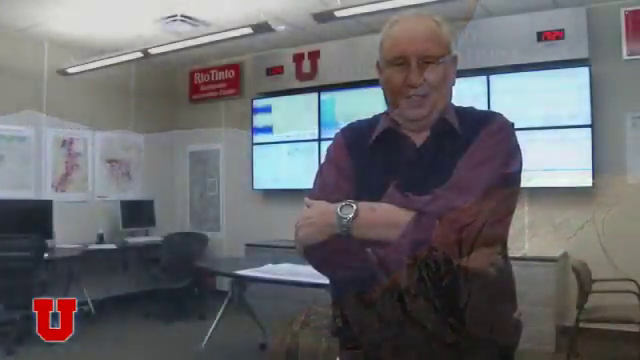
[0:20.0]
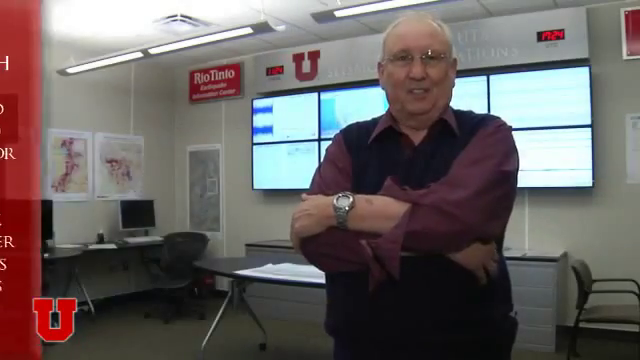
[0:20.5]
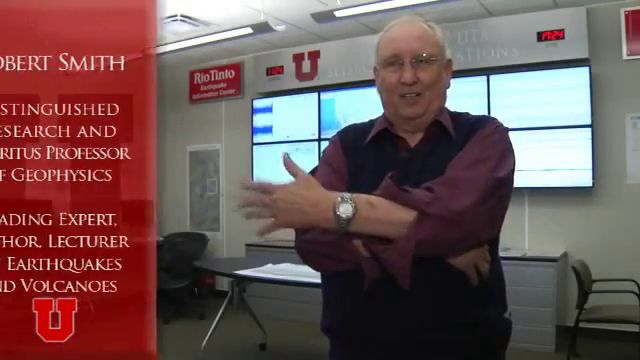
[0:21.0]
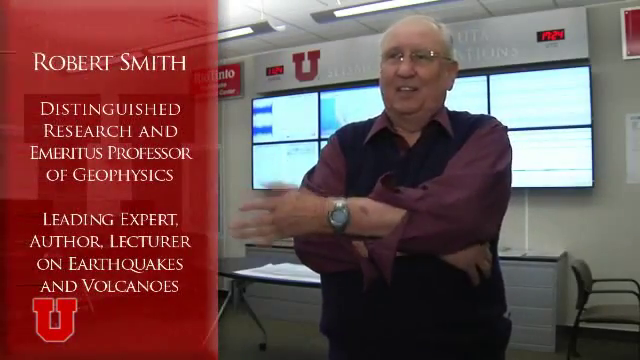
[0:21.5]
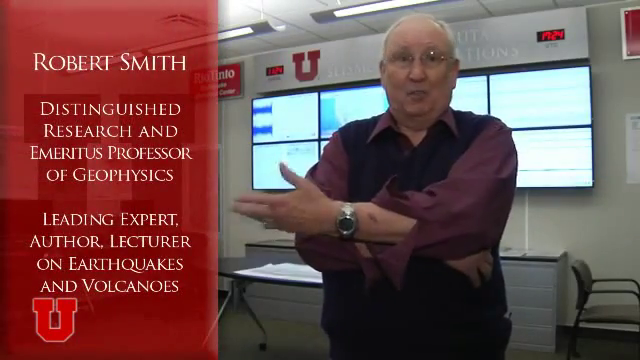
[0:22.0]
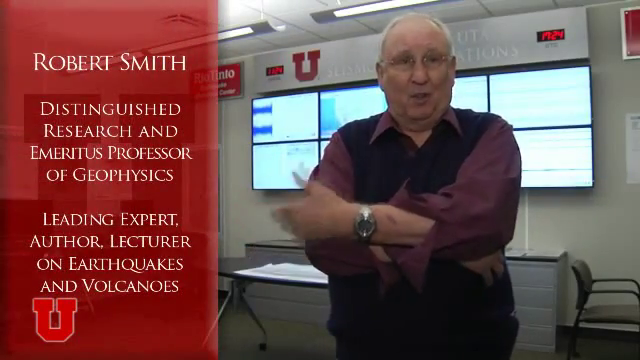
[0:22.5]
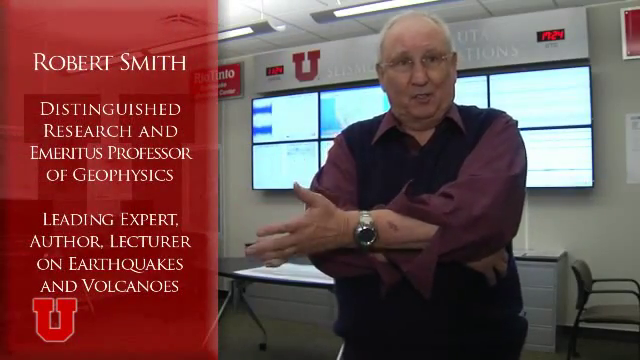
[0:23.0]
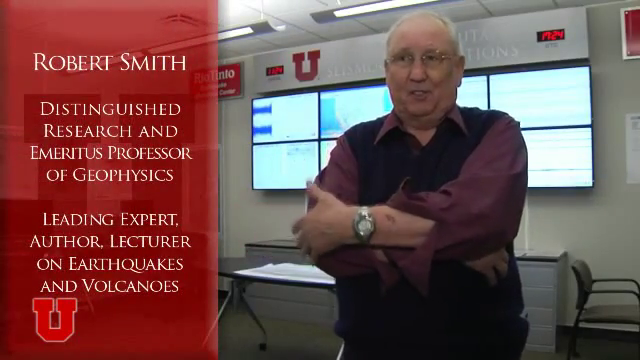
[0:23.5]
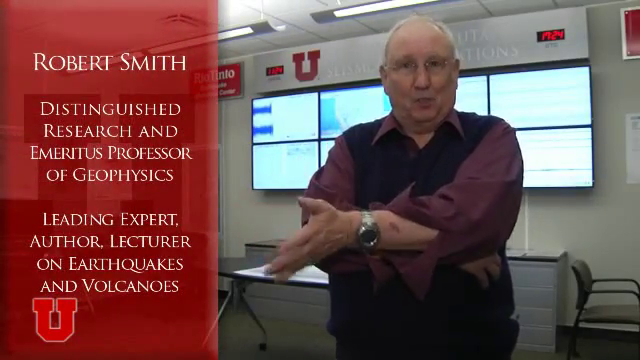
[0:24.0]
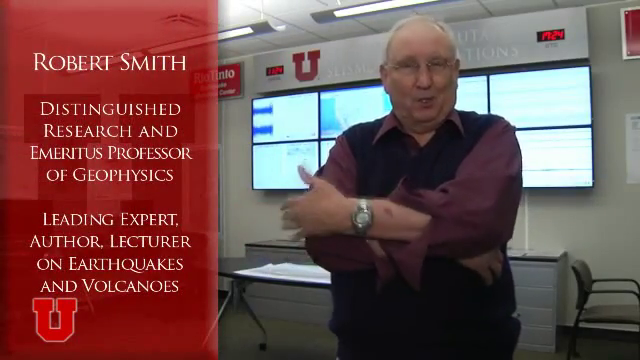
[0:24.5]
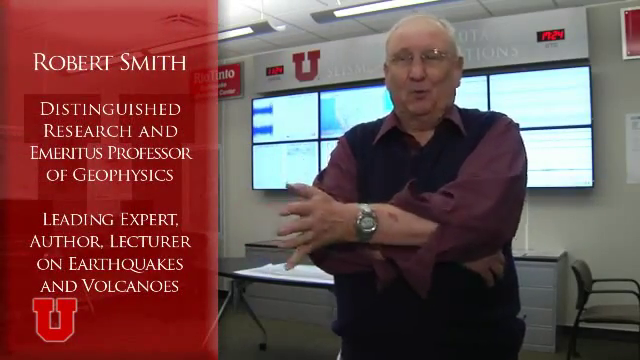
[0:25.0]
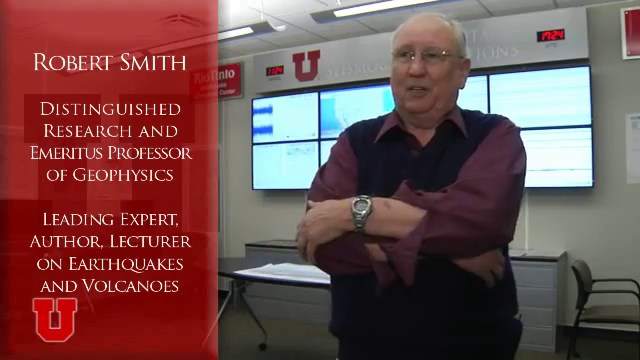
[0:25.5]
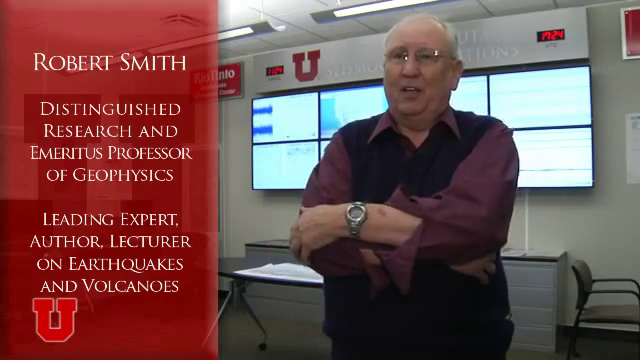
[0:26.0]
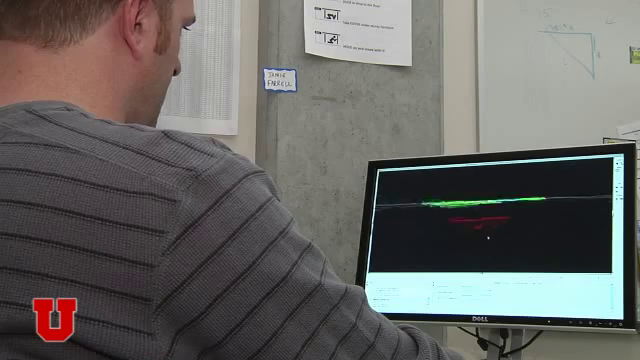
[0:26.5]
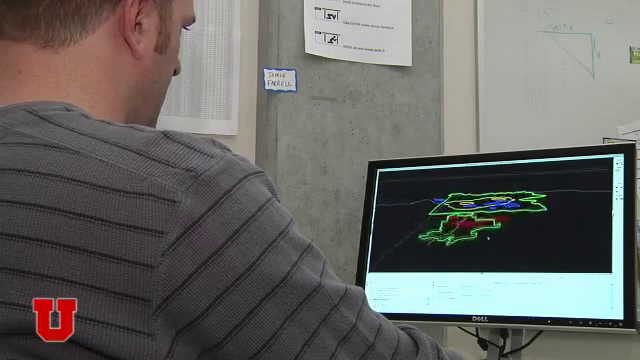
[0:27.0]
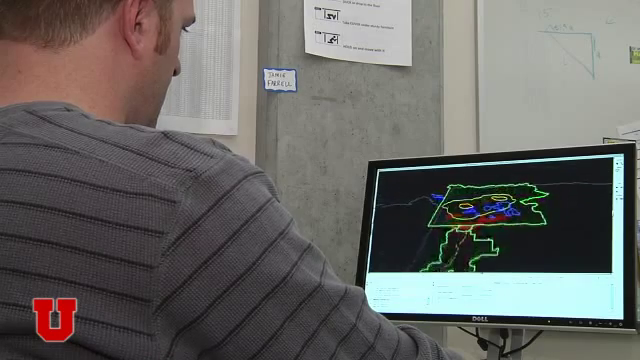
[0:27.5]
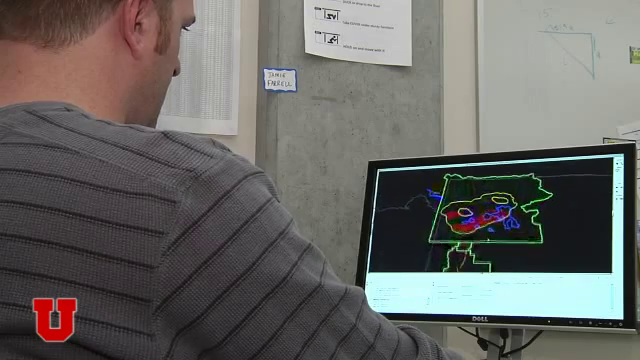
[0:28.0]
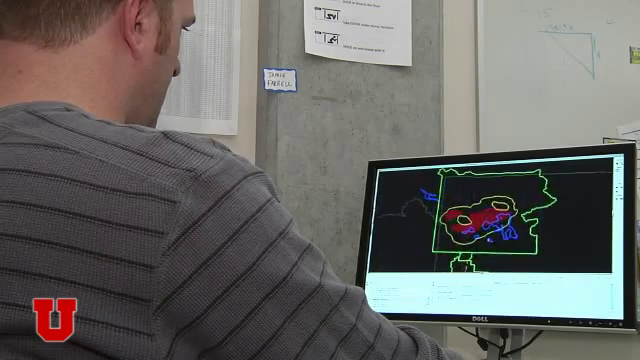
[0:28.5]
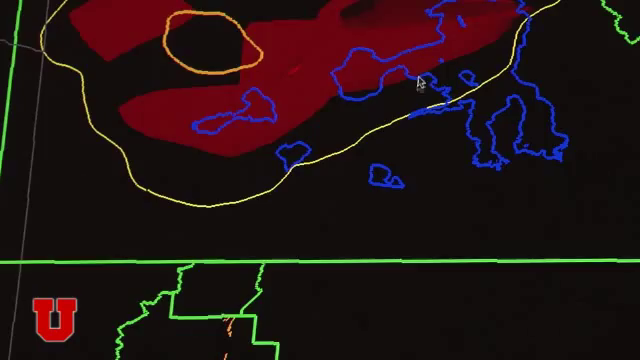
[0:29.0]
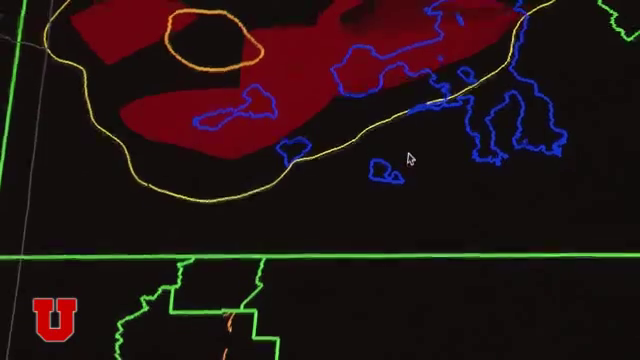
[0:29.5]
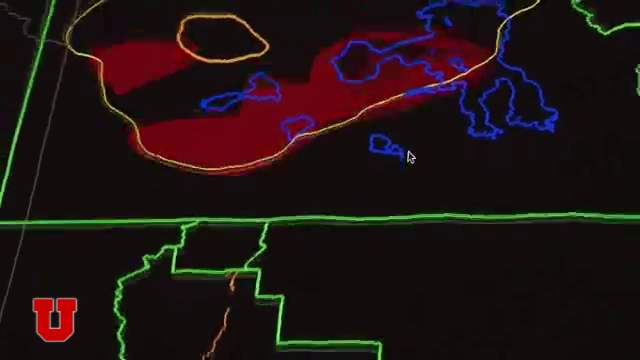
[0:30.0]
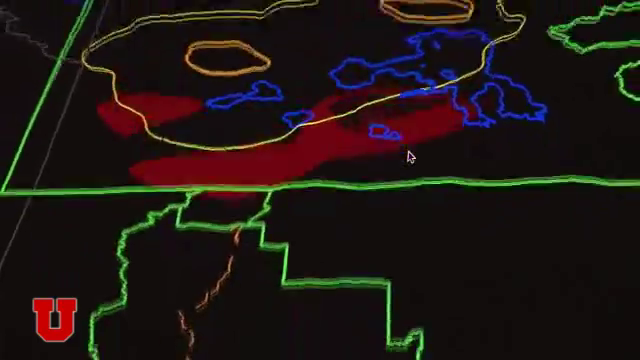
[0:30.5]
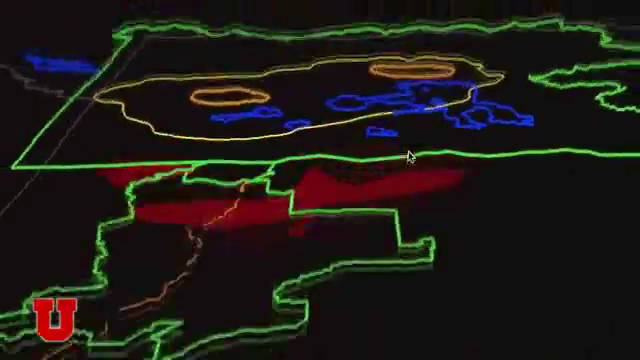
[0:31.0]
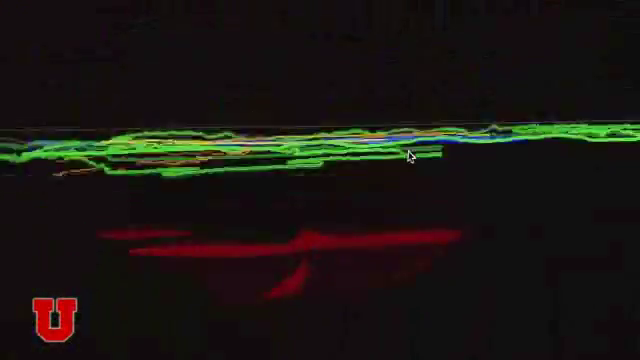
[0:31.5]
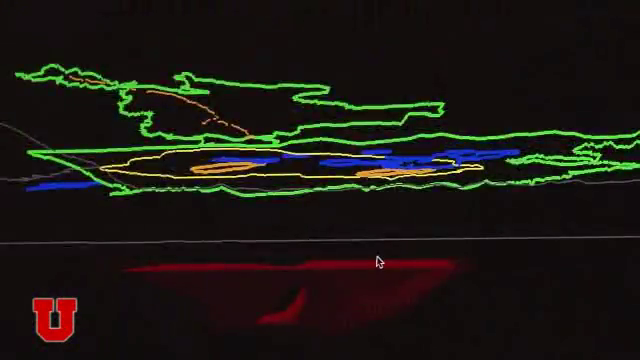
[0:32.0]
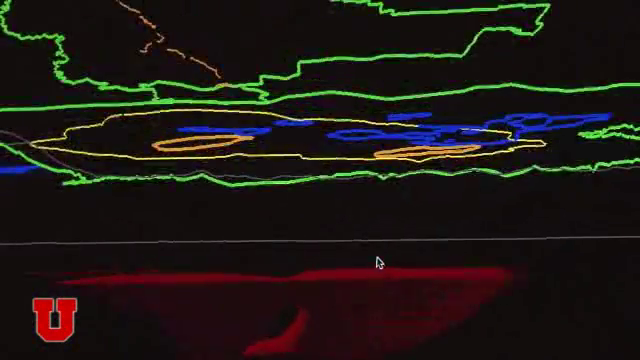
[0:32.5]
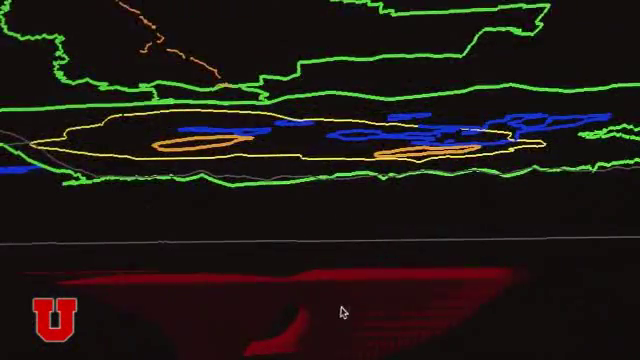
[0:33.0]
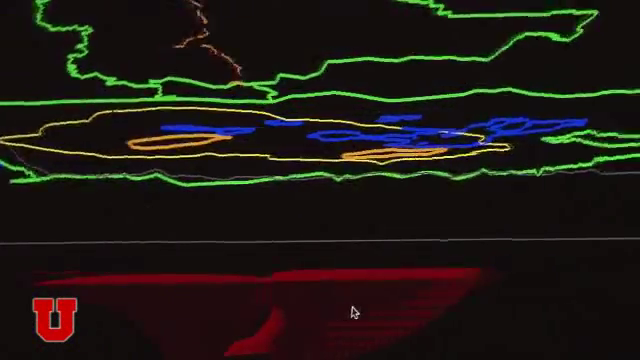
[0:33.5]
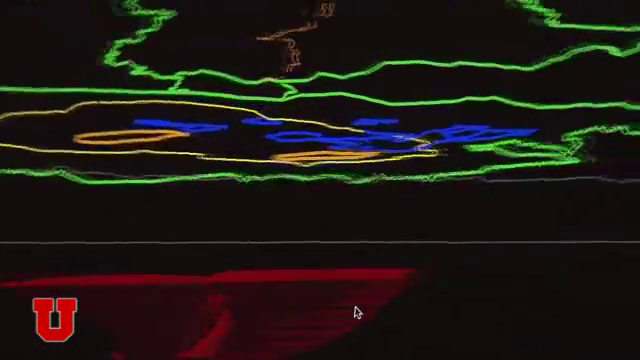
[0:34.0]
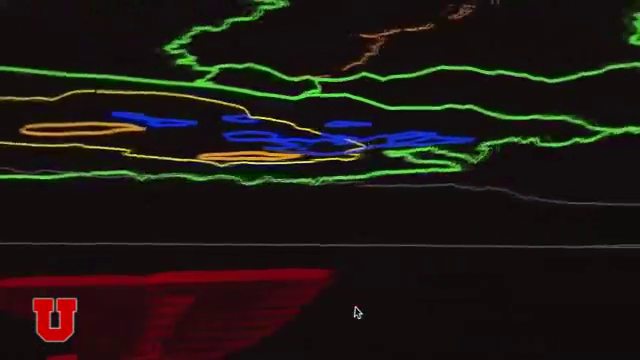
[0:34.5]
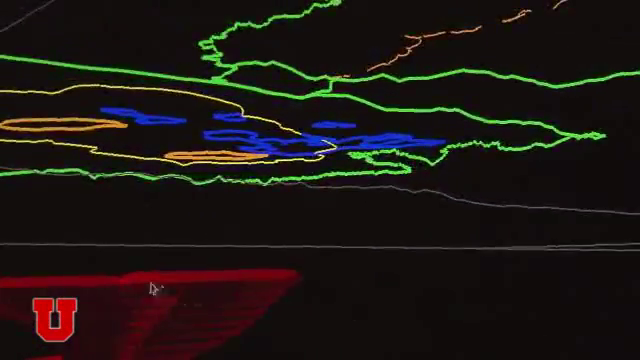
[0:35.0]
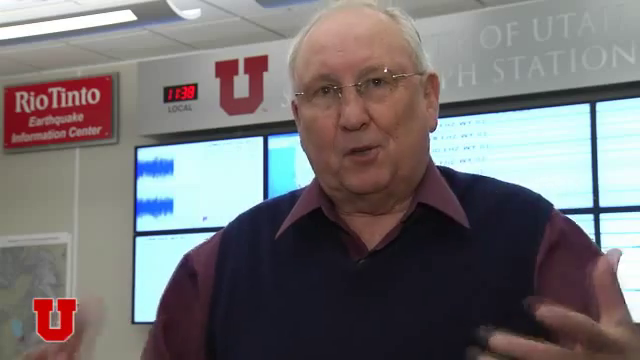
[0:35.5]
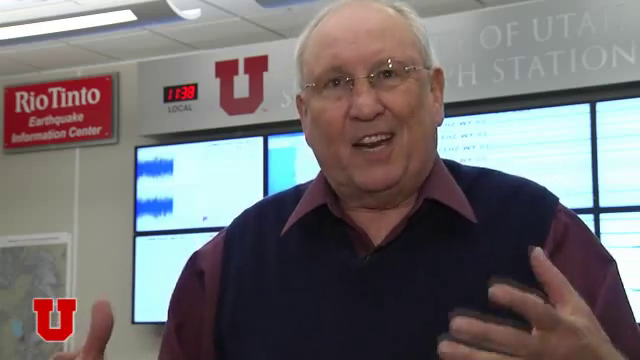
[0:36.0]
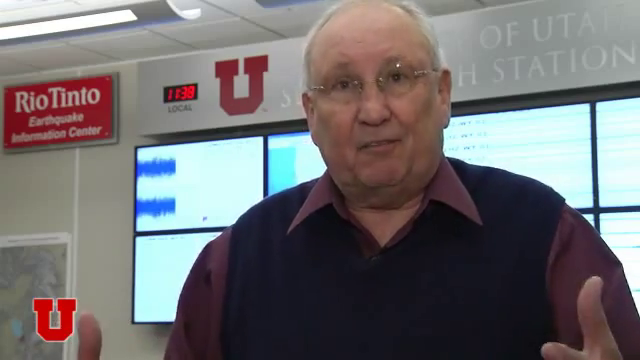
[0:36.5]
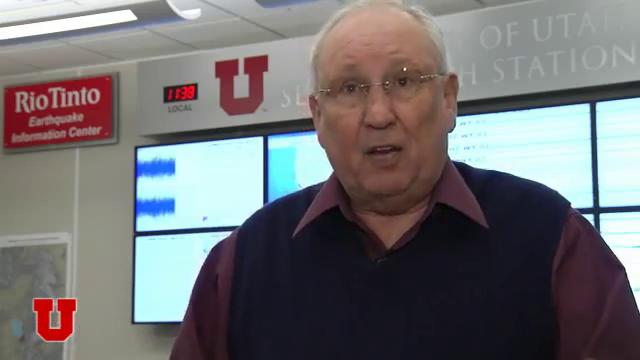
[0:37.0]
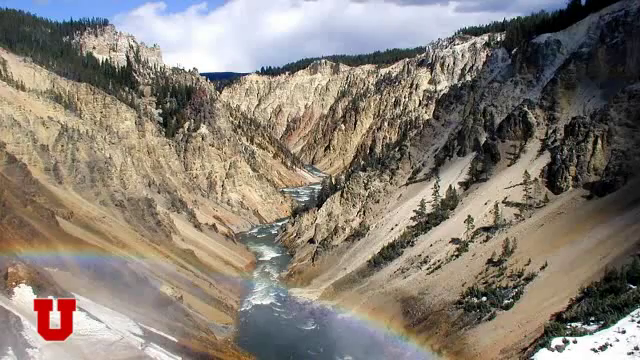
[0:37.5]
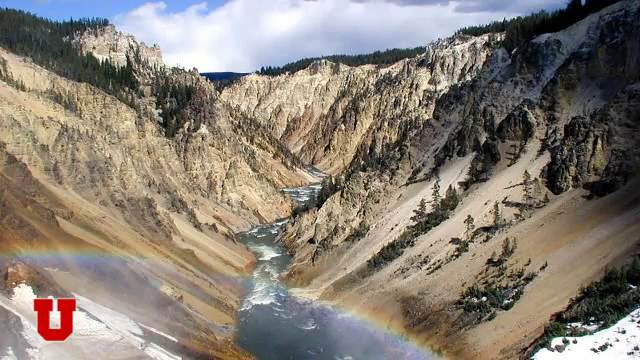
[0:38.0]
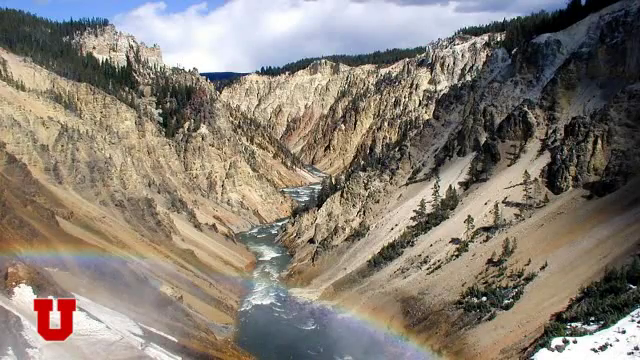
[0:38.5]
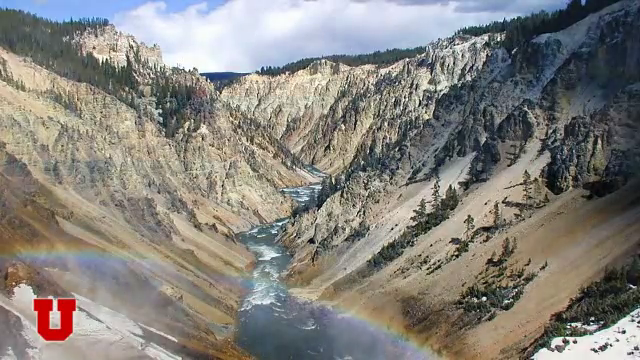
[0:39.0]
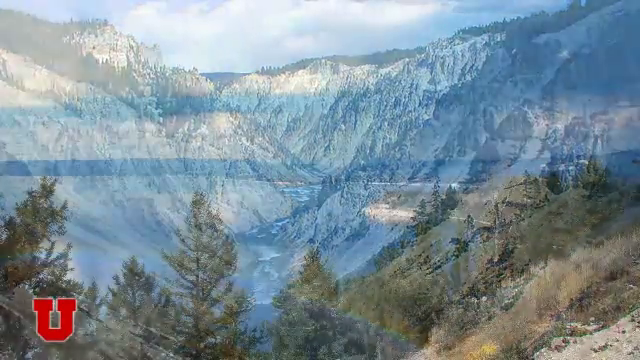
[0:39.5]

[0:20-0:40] The older man appears, apparently named Robert Smith, and he looks like a researcher and professor of geophysics. Presumably a student uses what appears to be a topography map on a computer, with different layers in different colors; the blue is possibly water, or possibly different elevations. The view zooms around more landscape. Mr. Smith talks very animatedly and looks like he is enjoying himself. He is standing in what looks like maybe a lab or a classroom, with what might be a bunch of computer screens against the wall. The red U appears, and a sign in the upper left corner appears to say "Rio Tinto."